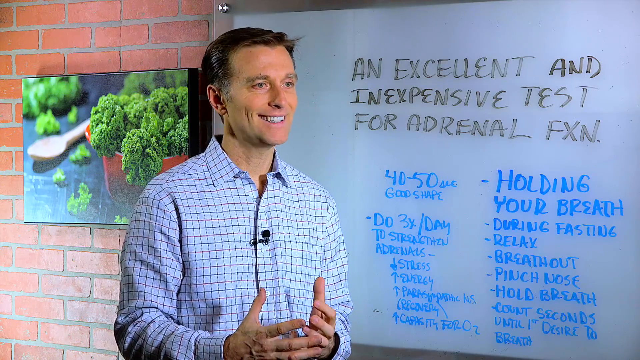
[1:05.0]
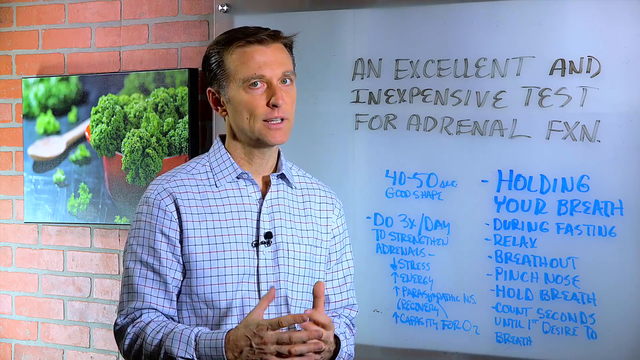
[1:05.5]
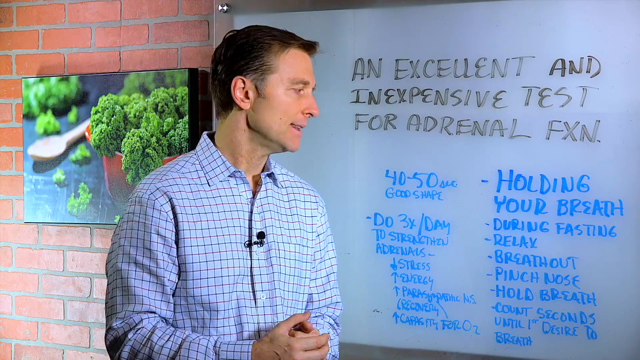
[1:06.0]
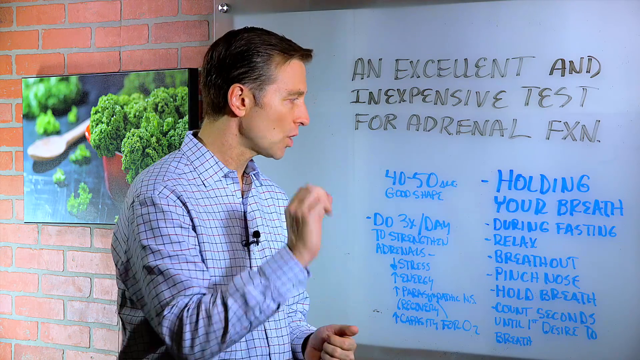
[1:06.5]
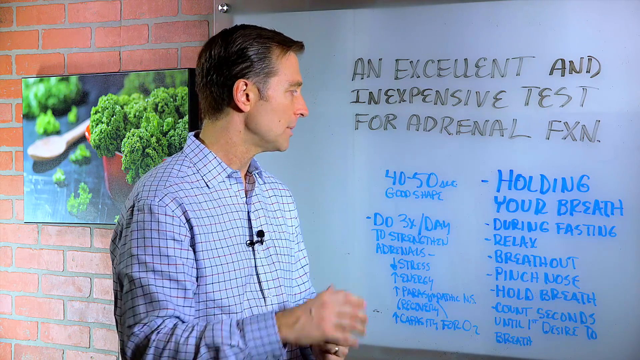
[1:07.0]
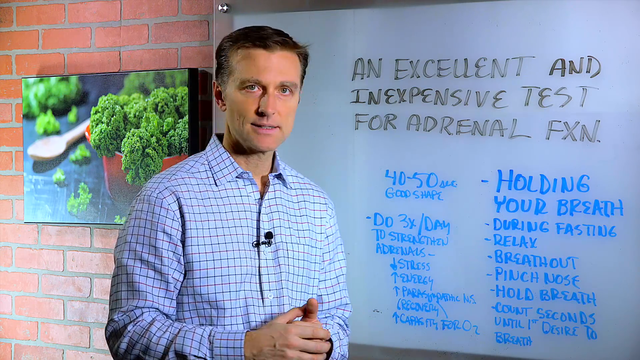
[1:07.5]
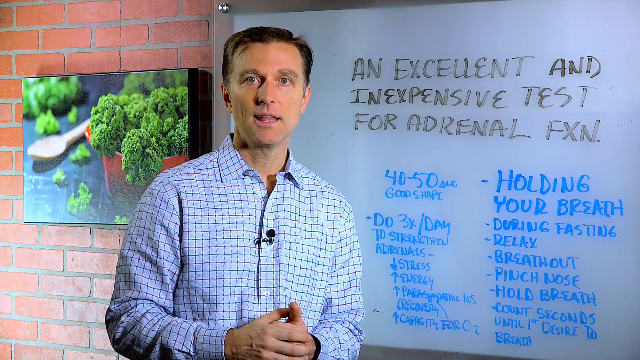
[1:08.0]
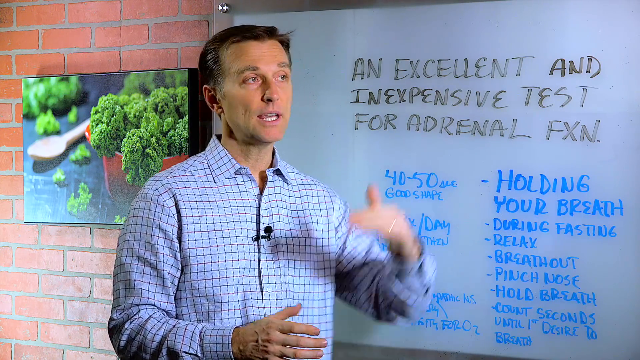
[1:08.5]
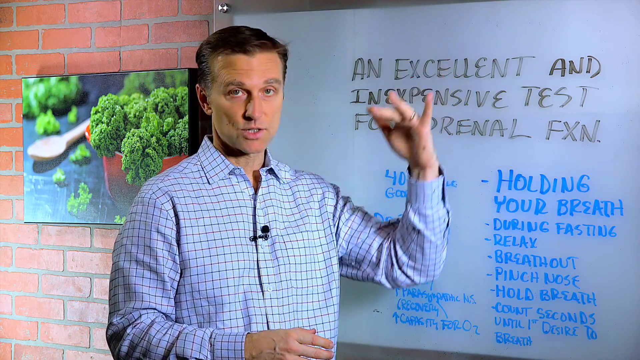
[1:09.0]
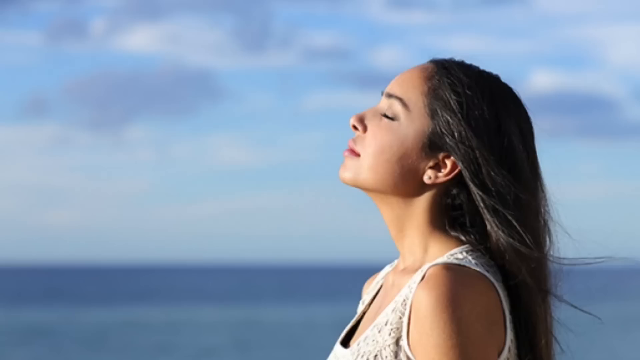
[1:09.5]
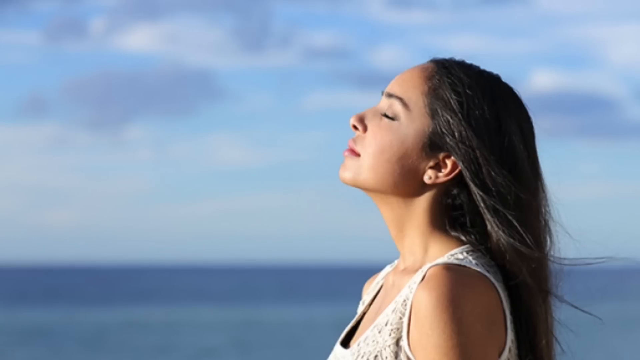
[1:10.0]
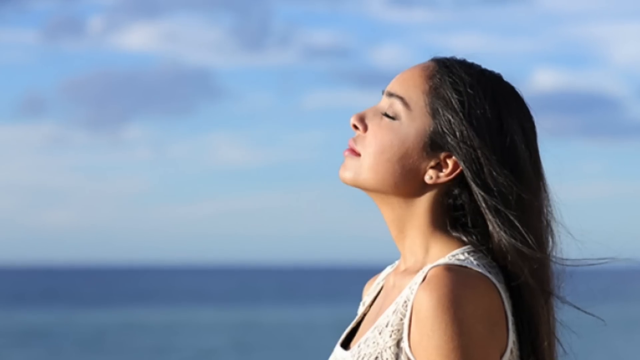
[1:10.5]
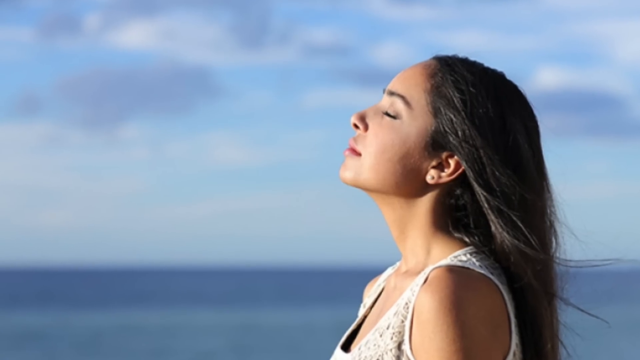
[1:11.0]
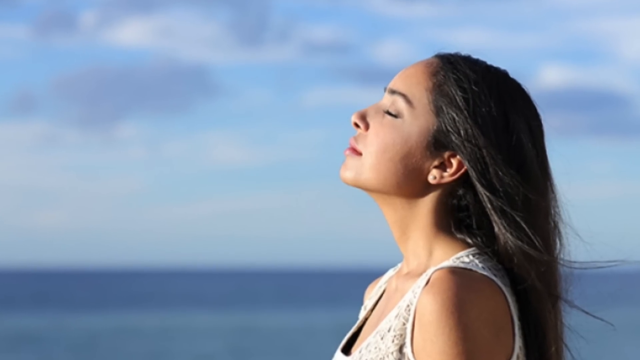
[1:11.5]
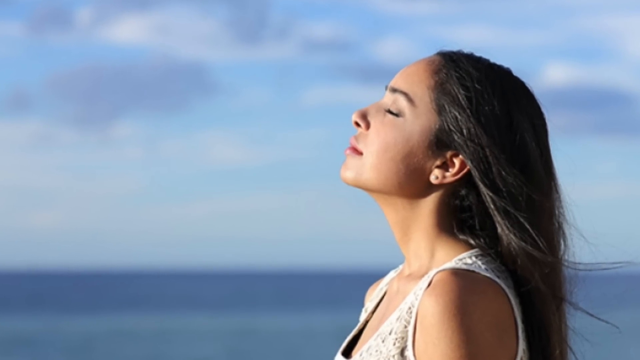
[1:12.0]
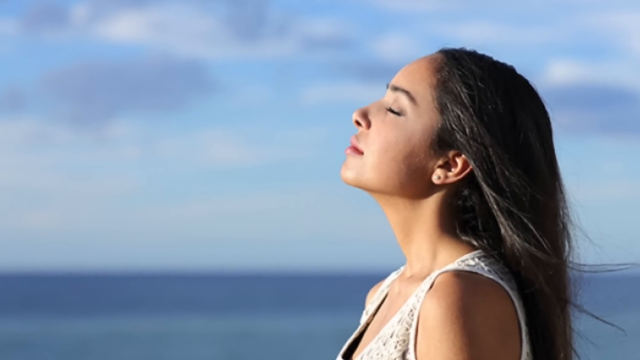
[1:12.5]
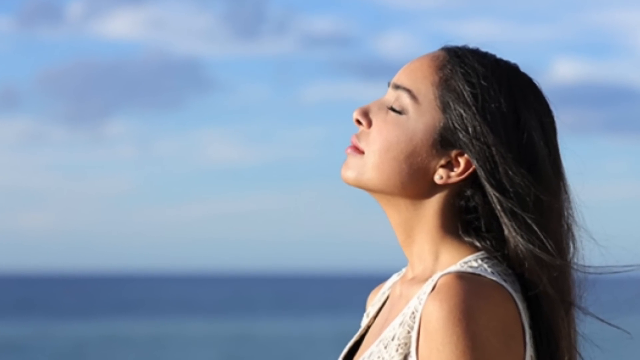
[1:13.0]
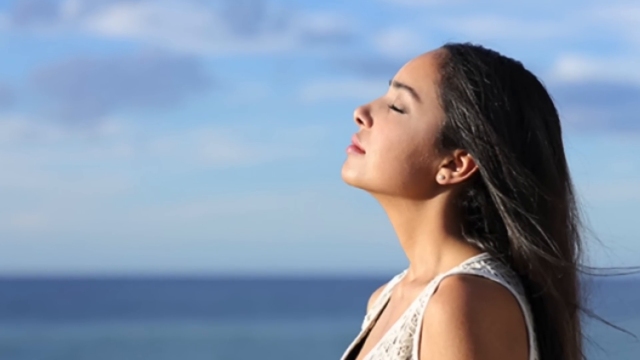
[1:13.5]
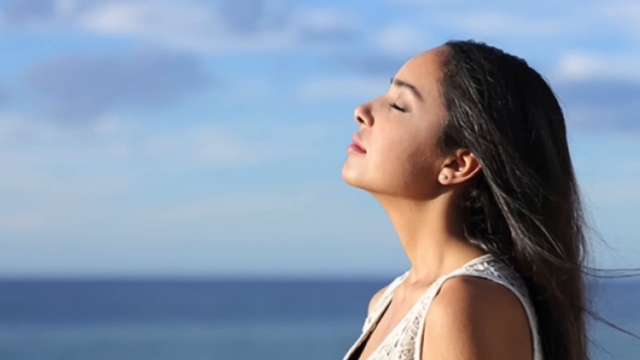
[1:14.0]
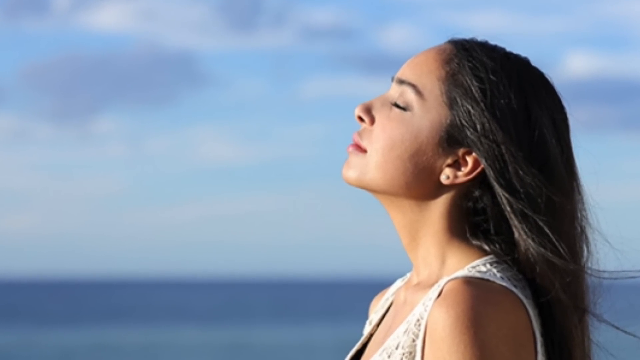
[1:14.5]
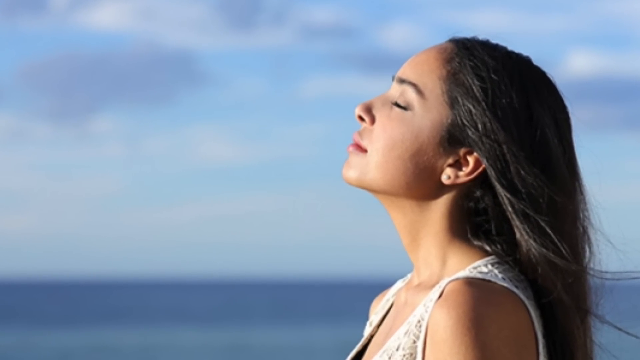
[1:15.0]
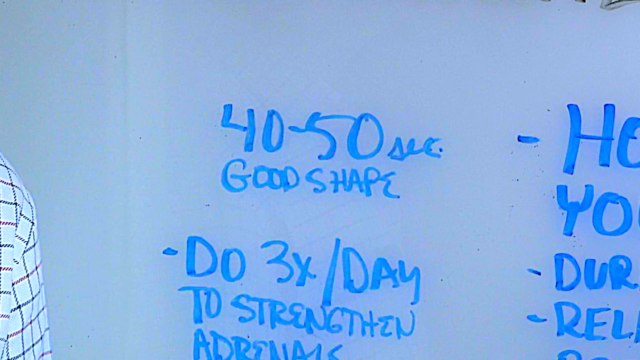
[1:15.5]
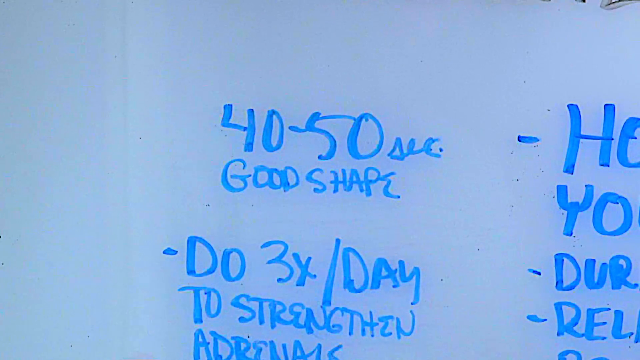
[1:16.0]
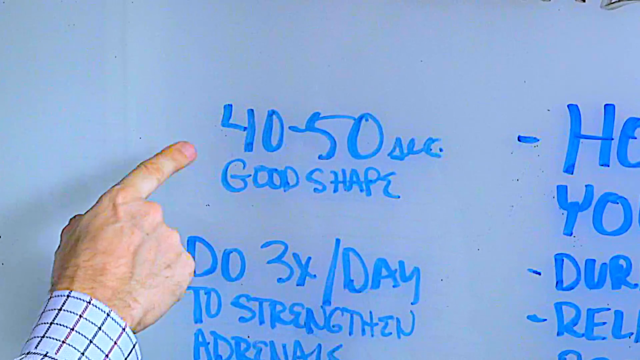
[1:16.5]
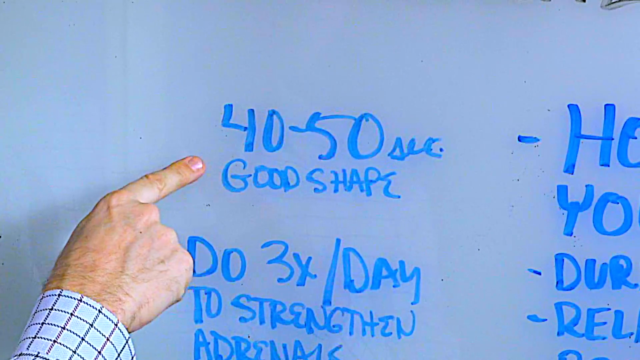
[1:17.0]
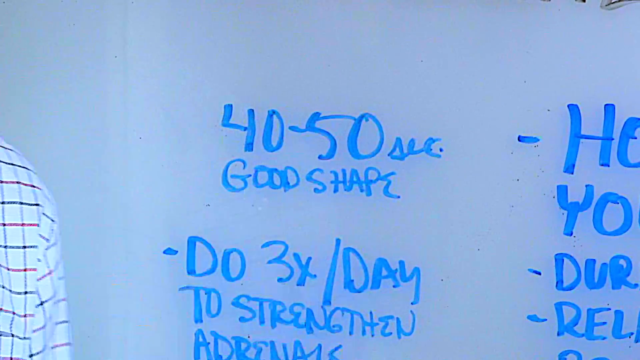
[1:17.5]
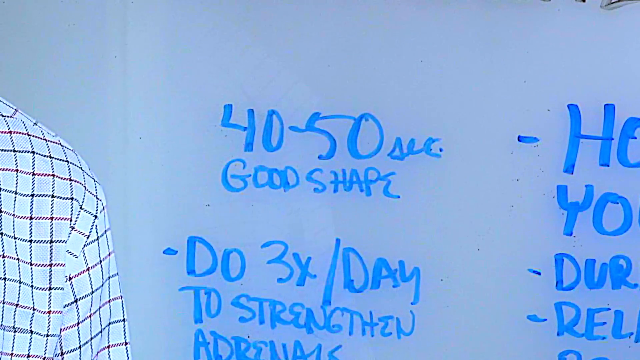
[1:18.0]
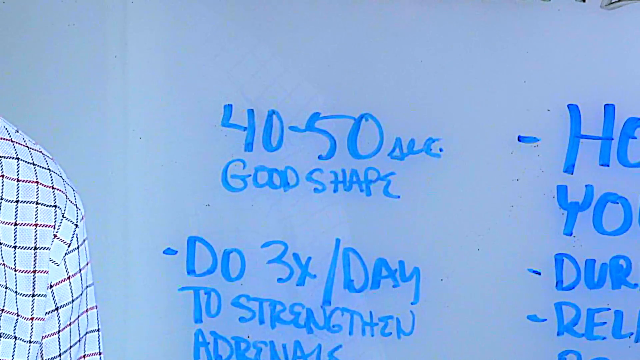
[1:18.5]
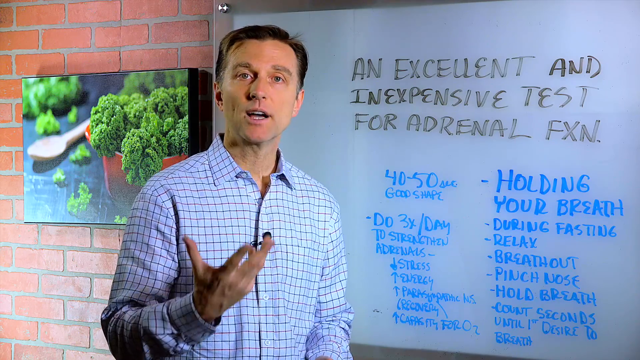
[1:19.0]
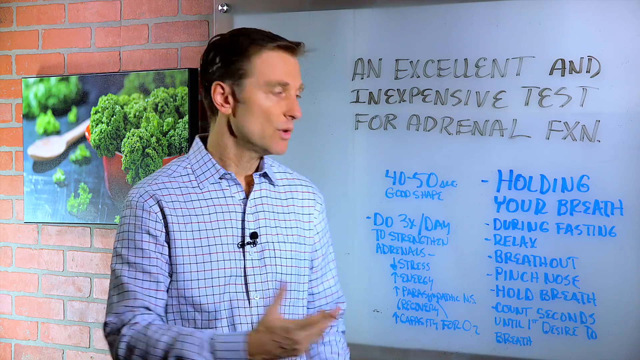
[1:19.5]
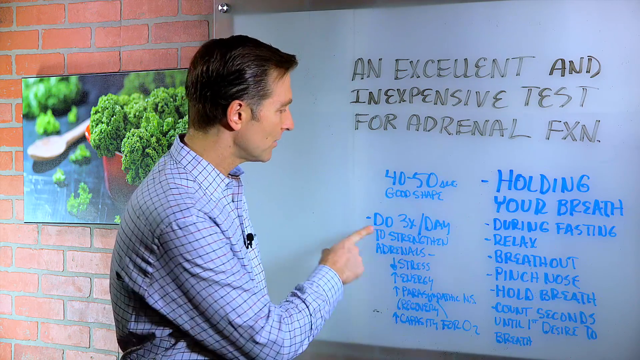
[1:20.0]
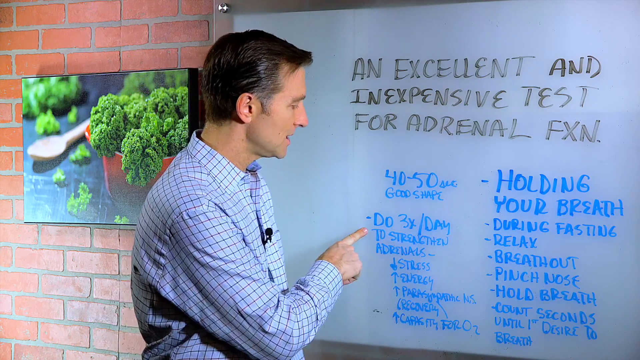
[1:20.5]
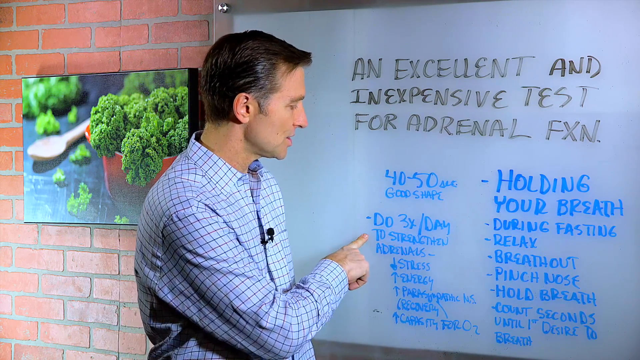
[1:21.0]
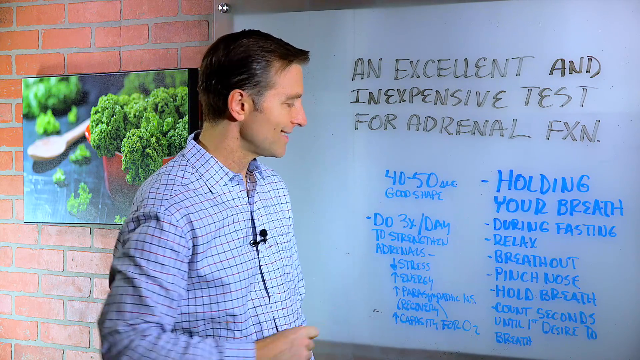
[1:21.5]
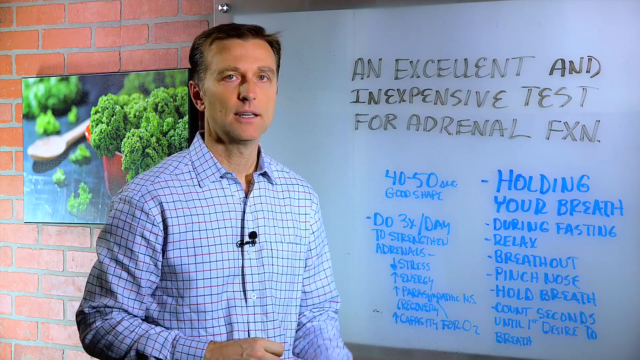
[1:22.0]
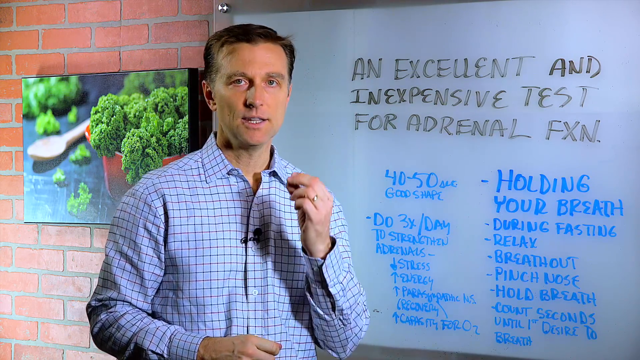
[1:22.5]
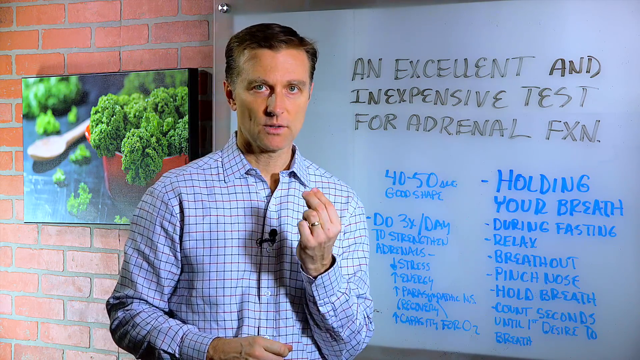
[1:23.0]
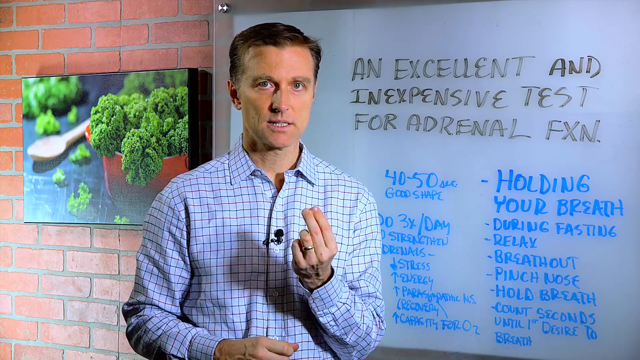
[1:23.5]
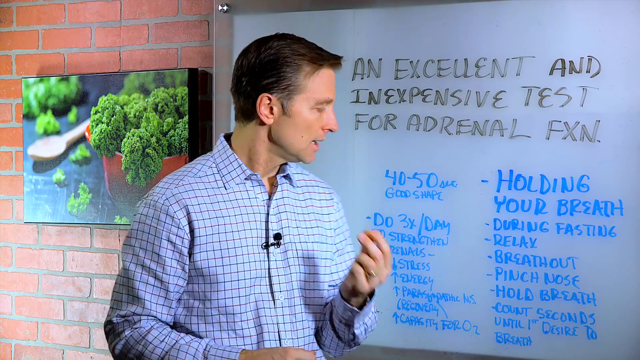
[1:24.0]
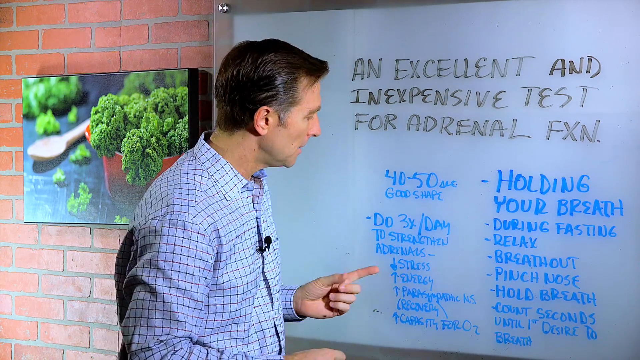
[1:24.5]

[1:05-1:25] The man speaks, raising his right hand almost to his face as he gestures, then raising his left hand too. The video then shows a side view of a woman against a clear blue sky and some water, with the horizon visible where the sky meets the grey water. Her eyes are closed, as if savouring being outdoors and breathing fresh air. Her long, thick, dark, straight hair flows behind her shoulders, over the nape of her neck and down her back. The camera then returns to the whiteboard in a very close-up view, where the man's finger points to the words "40 - 50, GOOD SHAPE". Below that is written "do three times per day to strengthen". The camera pans out to show the man still talking.